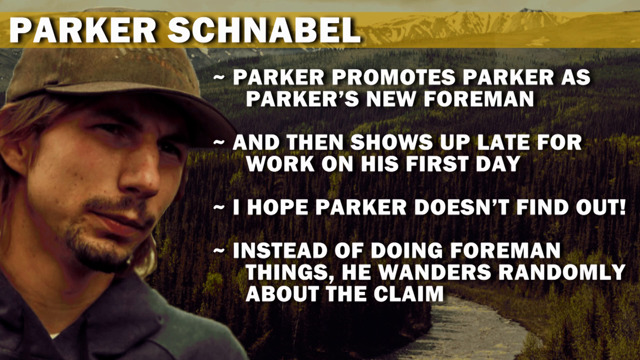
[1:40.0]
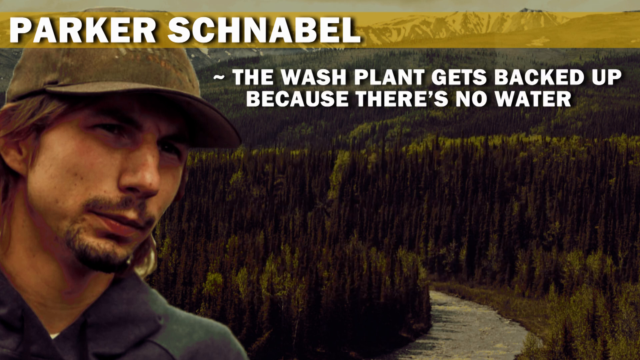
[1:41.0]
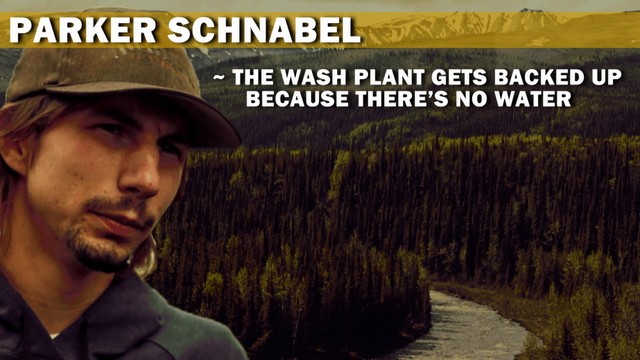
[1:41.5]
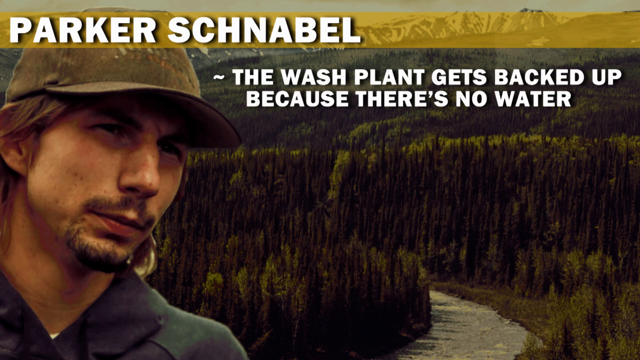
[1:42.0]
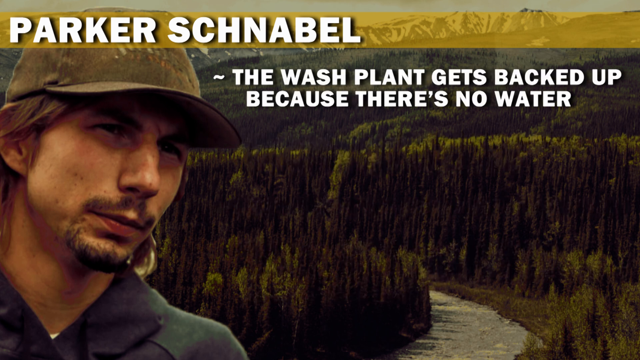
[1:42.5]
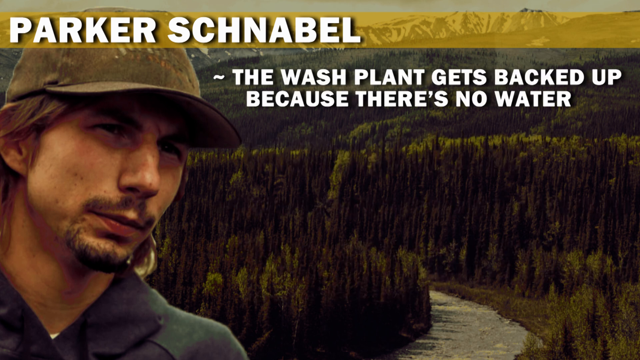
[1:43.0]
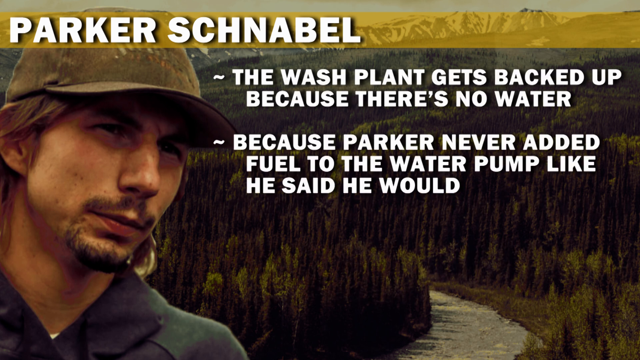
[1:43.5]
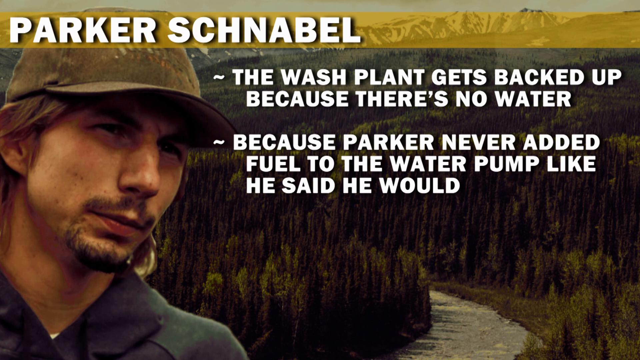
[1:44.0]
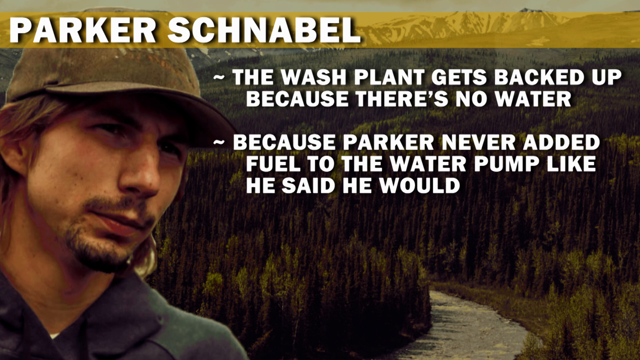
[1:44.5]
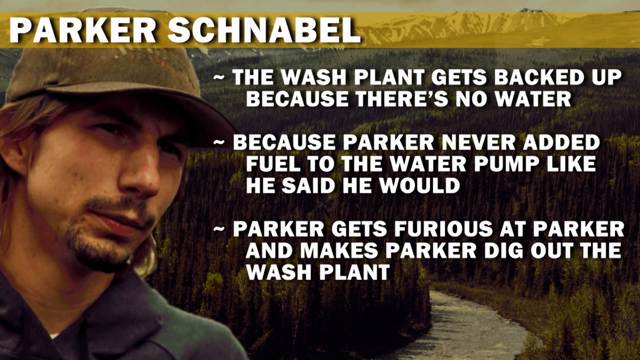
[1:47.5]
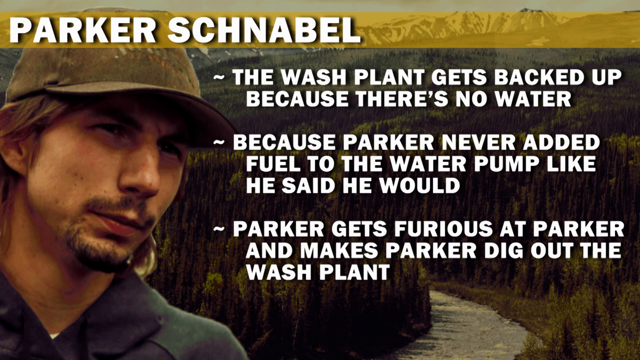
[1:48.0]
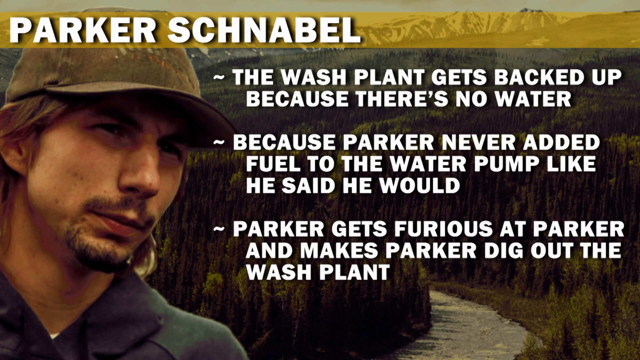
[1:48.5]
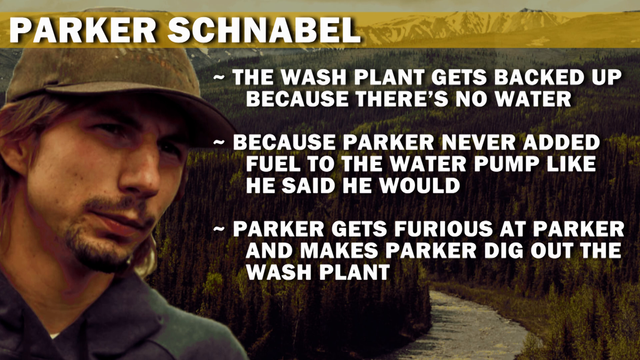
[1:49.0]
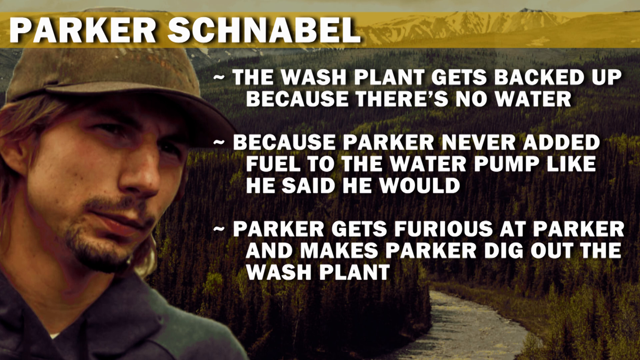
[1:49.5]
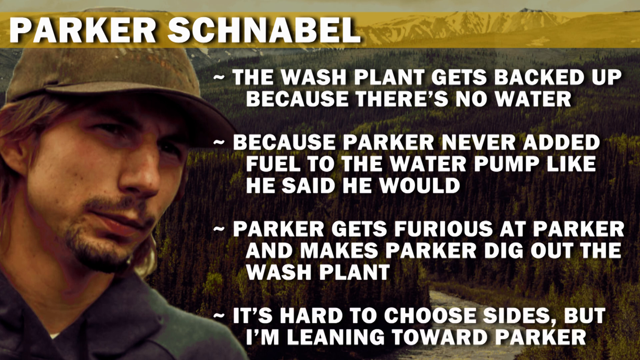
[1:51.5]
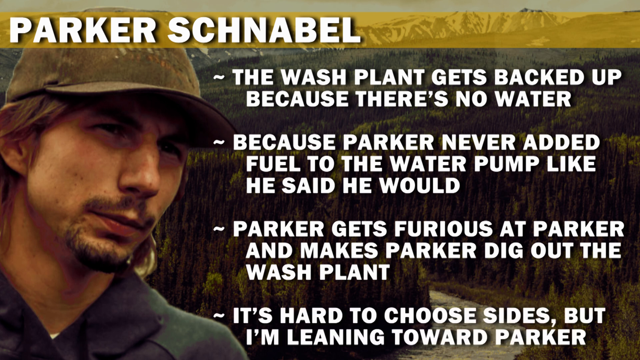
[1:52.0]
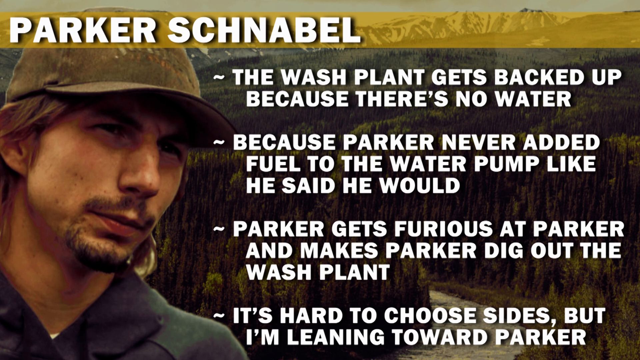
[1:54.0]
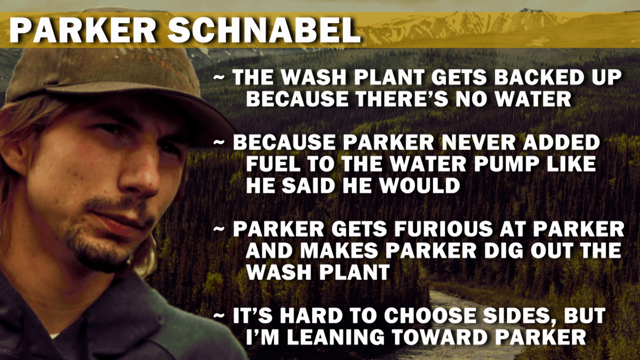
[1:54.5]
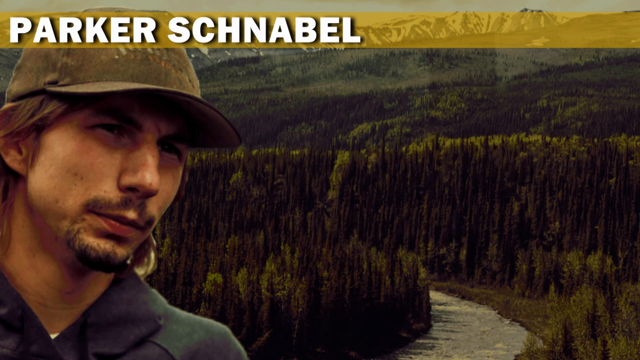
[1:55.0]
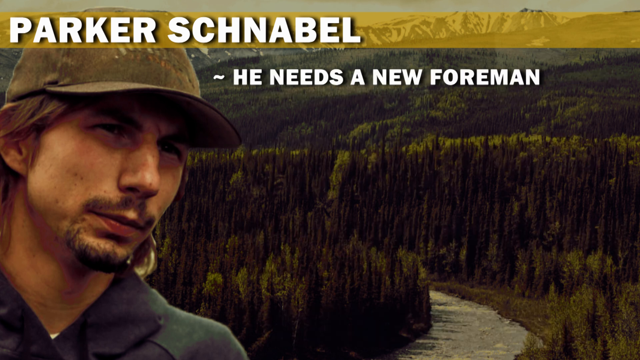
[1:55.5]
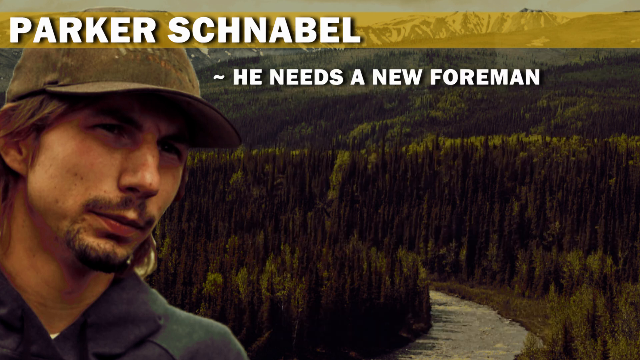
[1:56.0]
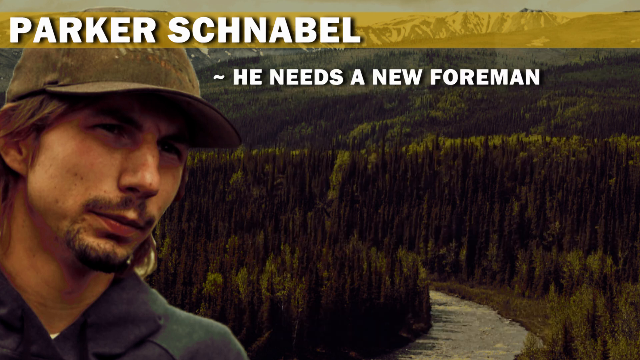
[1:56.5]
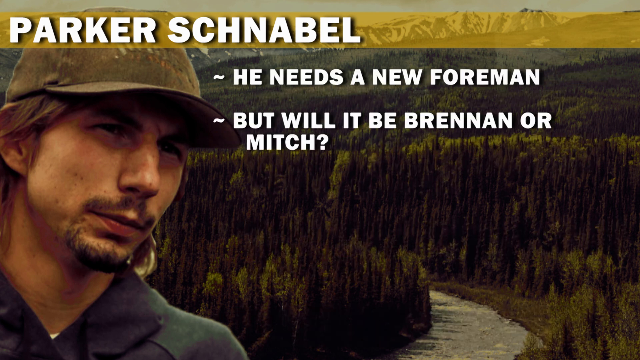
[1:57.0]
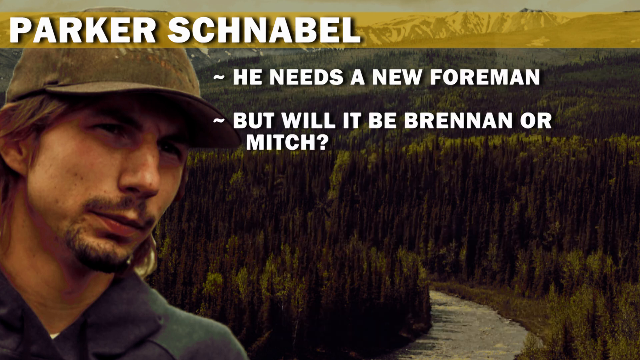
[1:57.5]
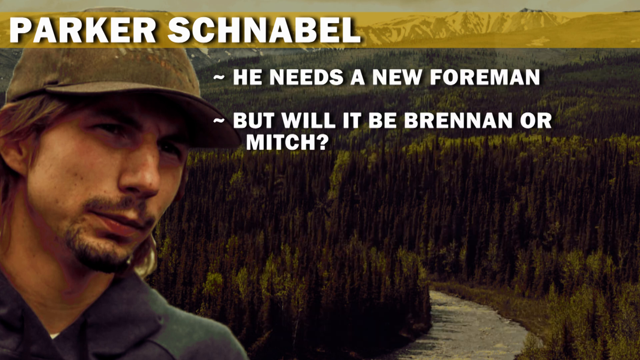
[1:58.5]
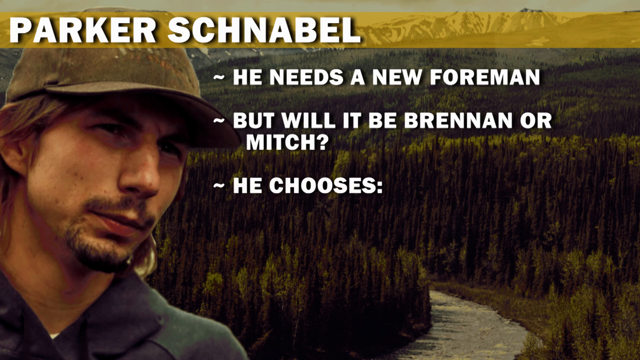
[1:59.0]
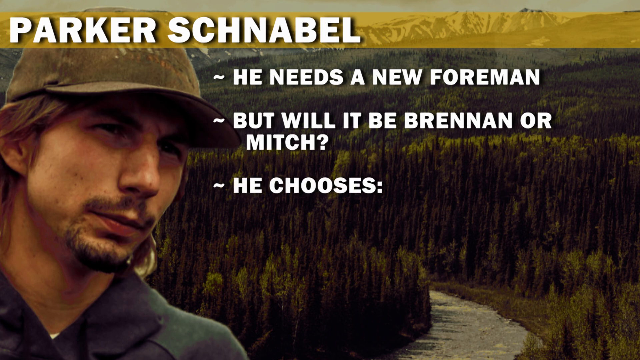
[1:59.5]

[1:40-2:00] The background image shows a vast forest with snowy mountains in the distance. At the top left of the screen is the name "Parker Schnabel", and an image of Parker Schnabel takes up the first quarter of the left-hand side of the screen. On the right-hand side are four bullet points: "Parker promotes Parker as Parker's new foreman.", "and then shows up late for work on his first day.", "I hope Parker doesn't find out." and "instead of doing foreman things he wonders randomly about the claim." Those bullet points disappear, and a new one appears at the top reading "the wash plant gets backed up because there's no water." Another appears reading "because Parker never added fuel to the water pump like he said he would.", then "Parker gets furious at Parker and makes Parker dig out the wash plant.", and finally "it's hard to choose sides but I'm leaning towards Parker." Those bullet points disappear and a new one reads "he needs a new foreman.", followed by "but will it be Brennan or Mitch?" and then "he chooses".